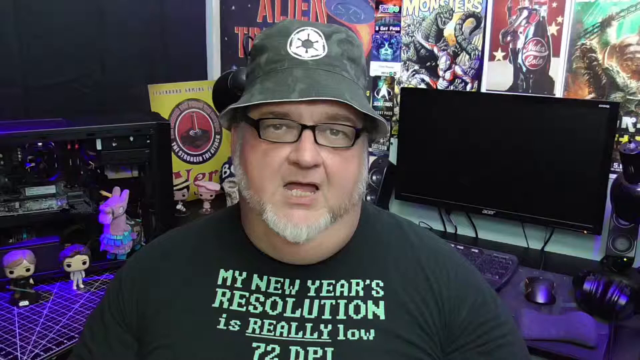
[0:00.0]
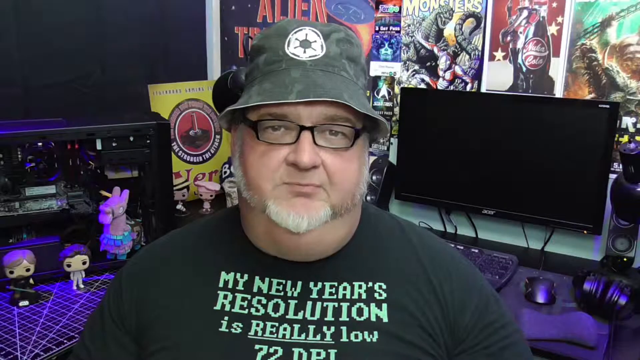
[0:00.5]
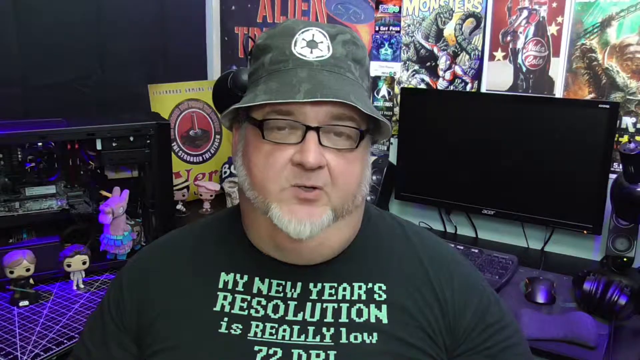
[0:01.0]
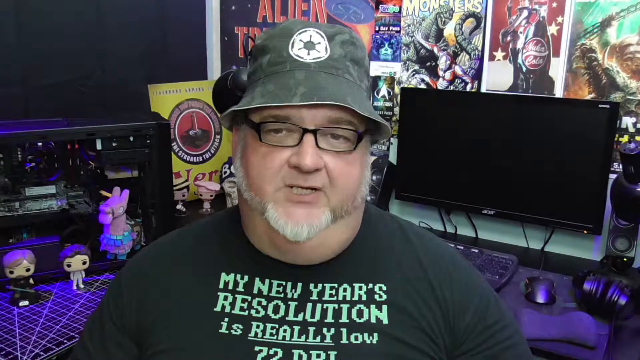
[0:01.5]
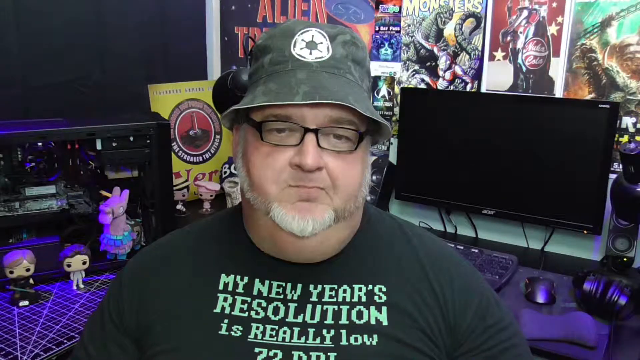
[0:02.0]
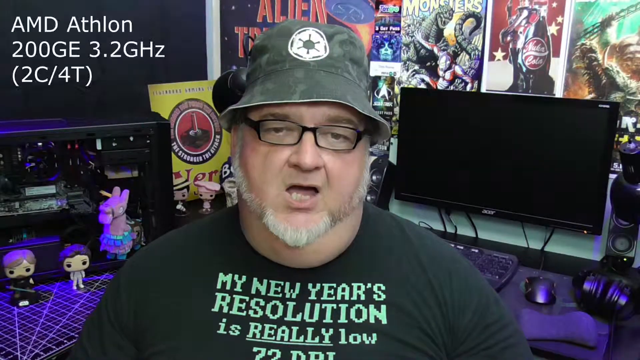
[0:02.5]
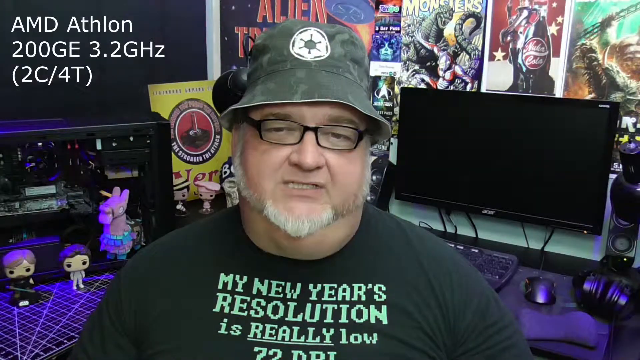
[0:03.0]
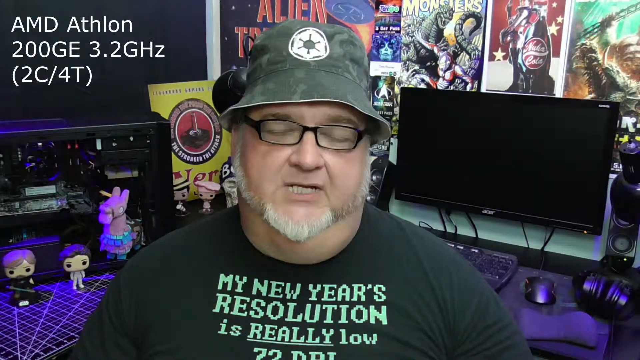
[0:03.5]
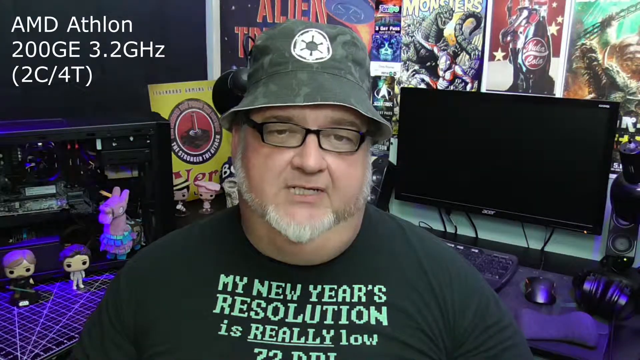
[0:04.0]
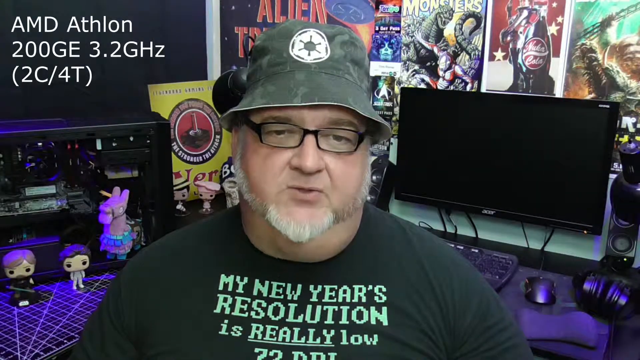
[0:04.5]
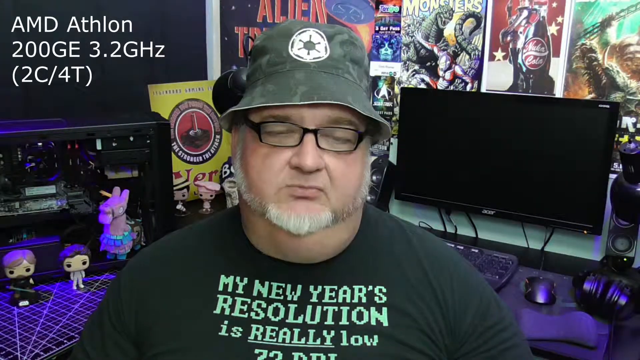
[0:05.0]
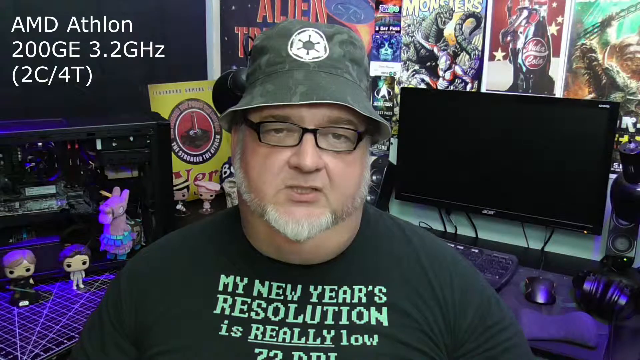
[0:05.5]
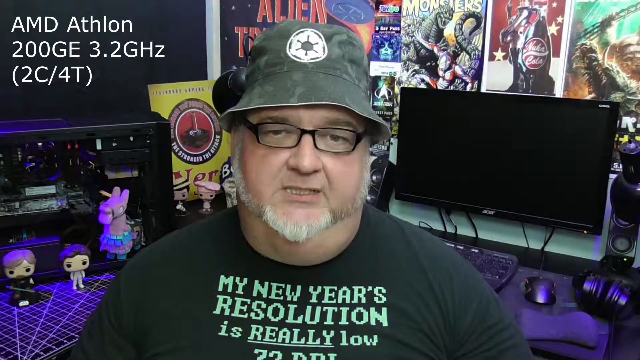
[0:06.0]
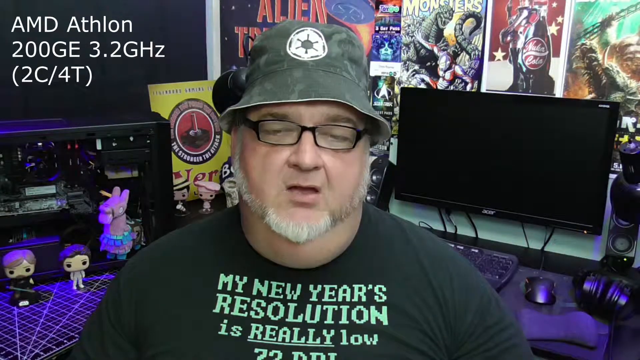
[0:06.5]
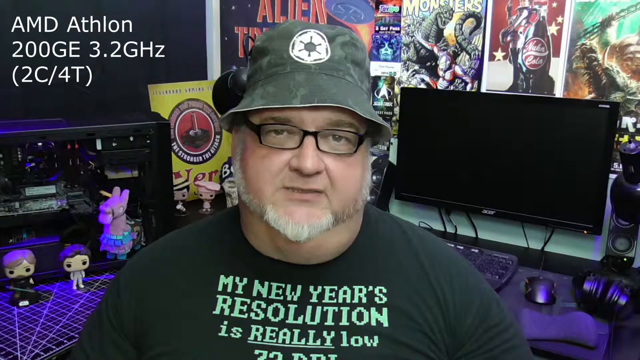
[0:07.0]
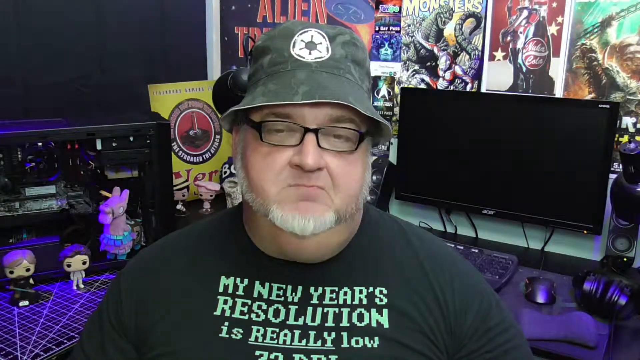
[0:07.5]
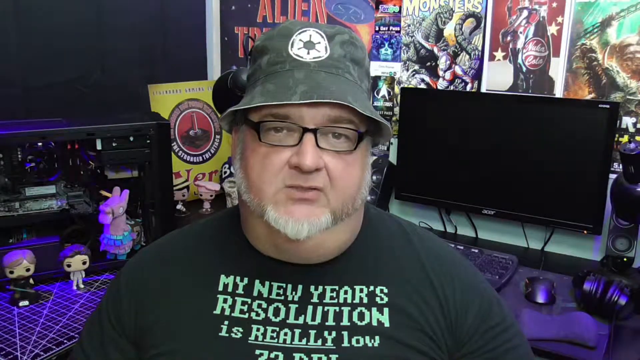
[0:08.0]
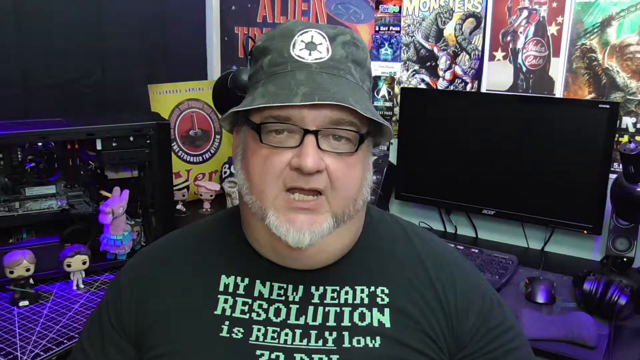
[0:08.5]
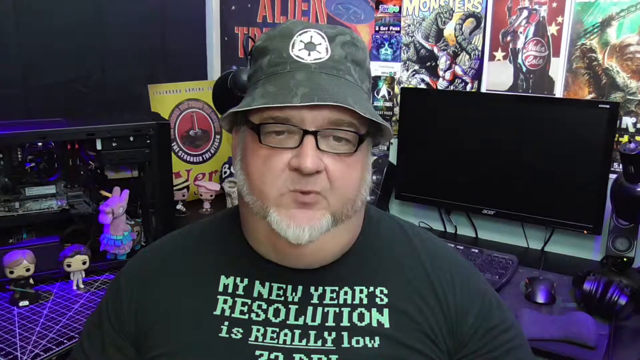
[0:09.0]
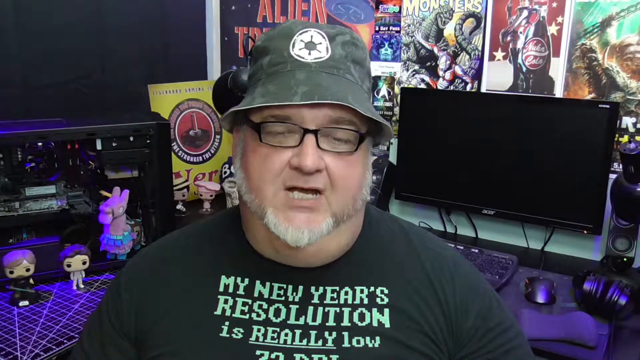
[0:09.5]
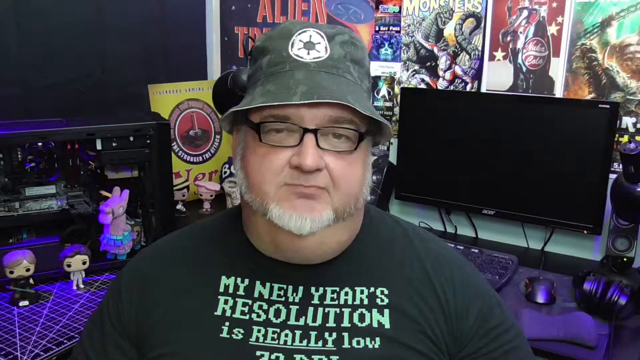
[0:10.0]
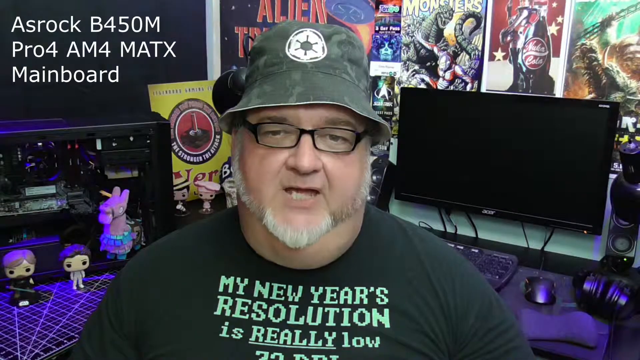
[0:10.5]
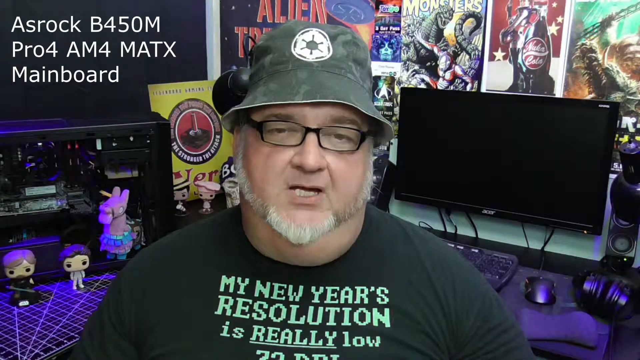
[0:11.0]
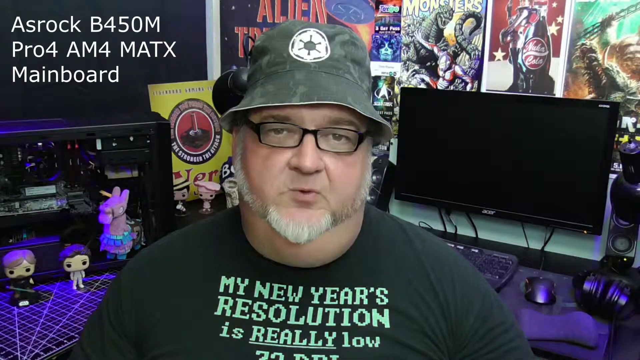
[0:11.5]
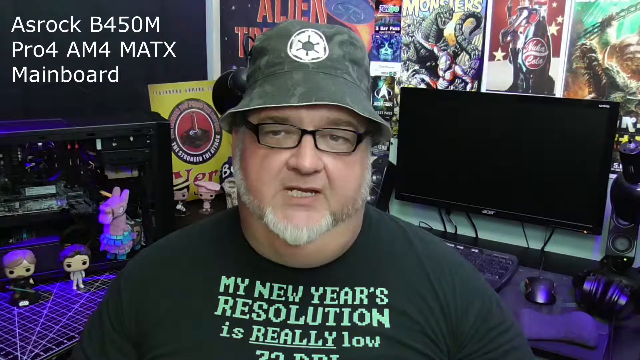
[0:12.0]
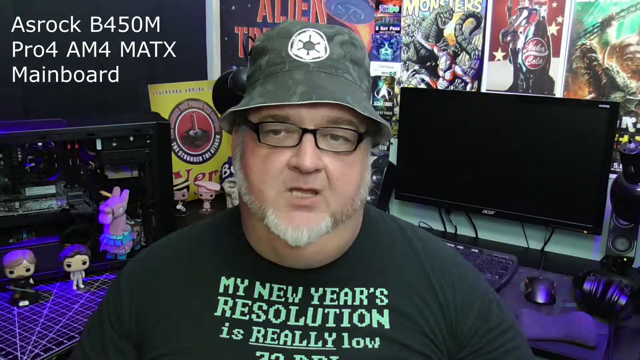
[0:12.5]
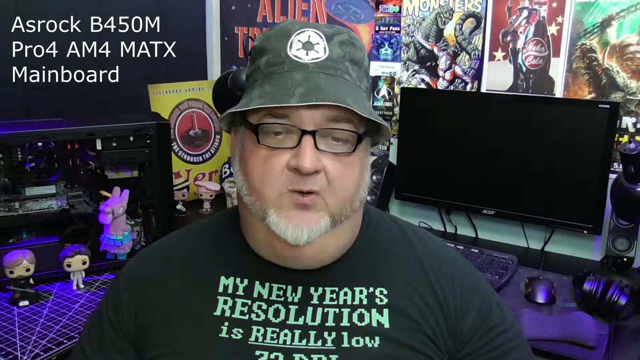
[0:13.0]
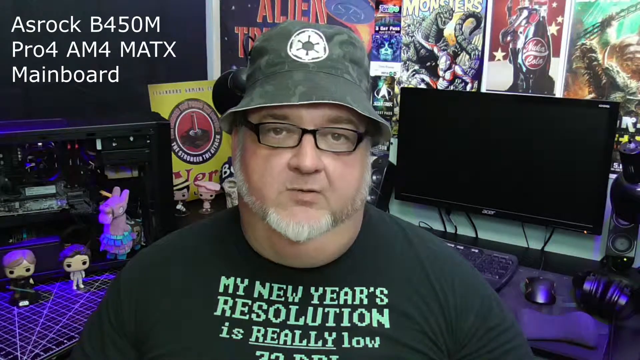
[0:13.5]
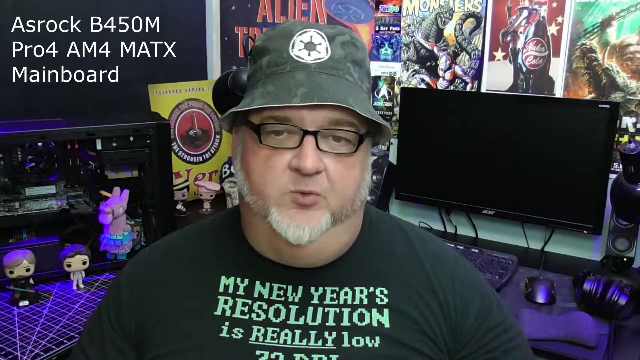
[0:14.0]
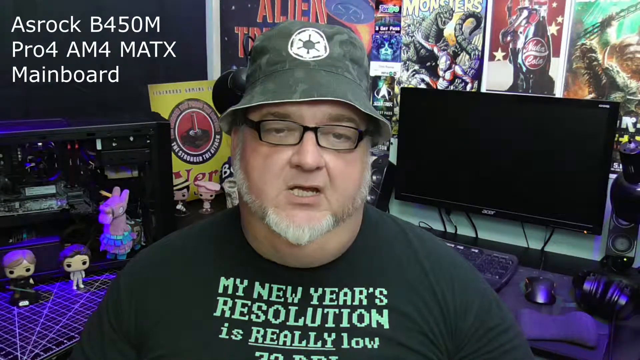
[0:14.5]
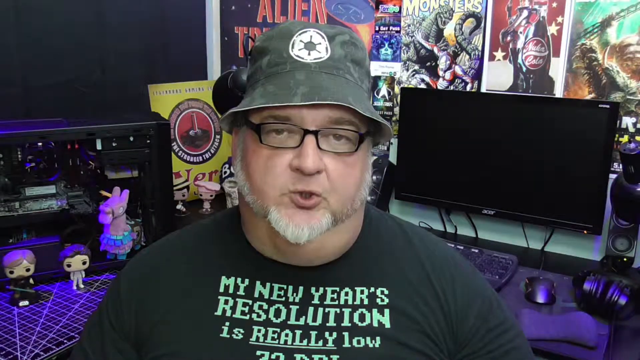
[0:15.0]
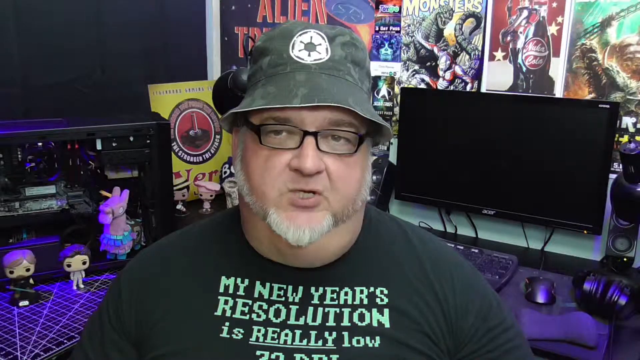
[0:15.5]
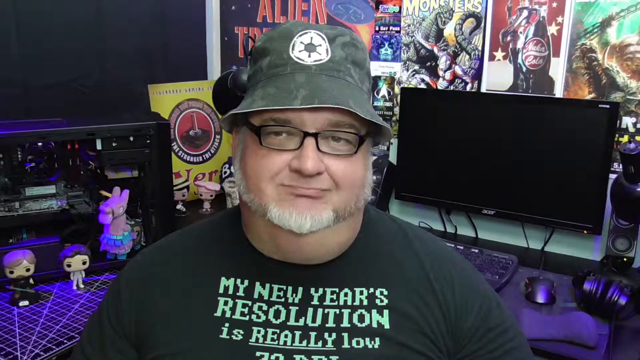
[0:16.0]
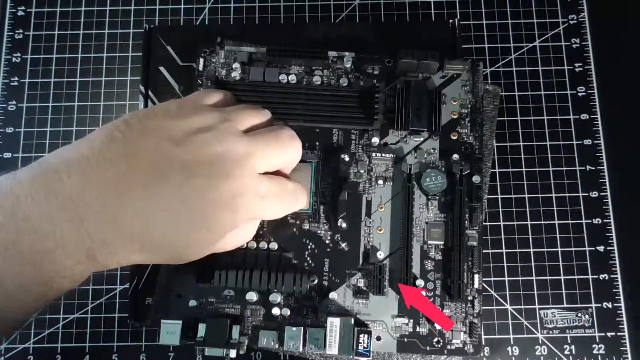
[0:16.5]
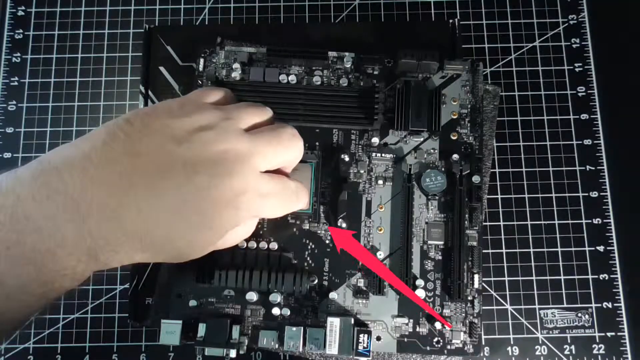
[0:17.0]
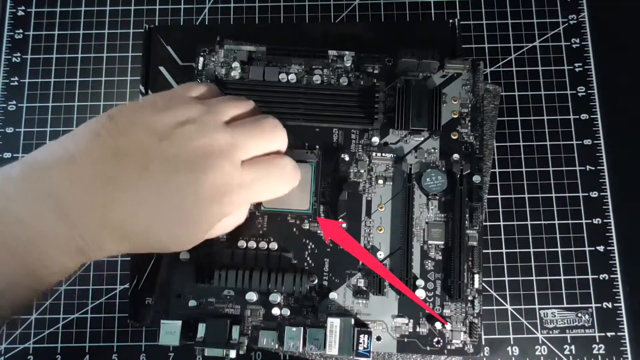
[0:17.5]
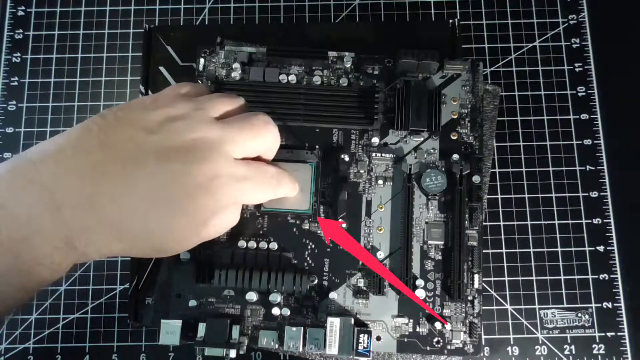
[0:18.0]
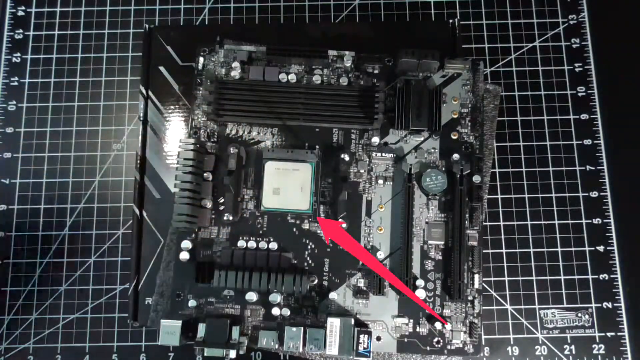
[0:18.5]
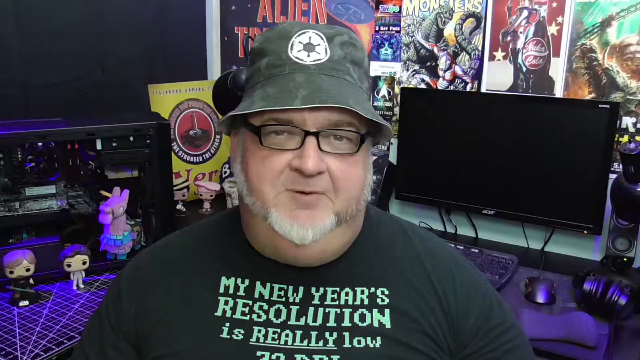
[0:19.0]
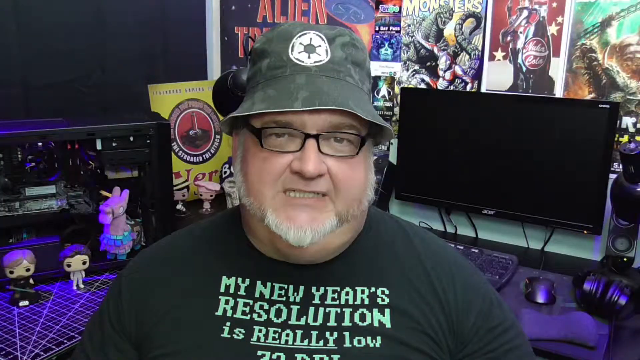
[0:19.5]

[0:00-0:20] The video seems to be a self-recording of a person talking to the camera, in a typical YouTube style. The person seems a little older, maybe in their late 30s or 40s, with a slightly wide beard that is quite tiny at the front and quite a big double chin that sticks out. They wear a black t-shirt with green lettering in a pixel-style font that says "my new year's resolution is really low". Behind them there seems to be what looks like maybe an open computer or some electronic, with a little figurine taking up half its space, a Fortnite piñata. There are two Funko Pops at the front of it and two others off to the back. A screen is mounted on the wall on the right side, and a keyboard and mouse are on the back desk.